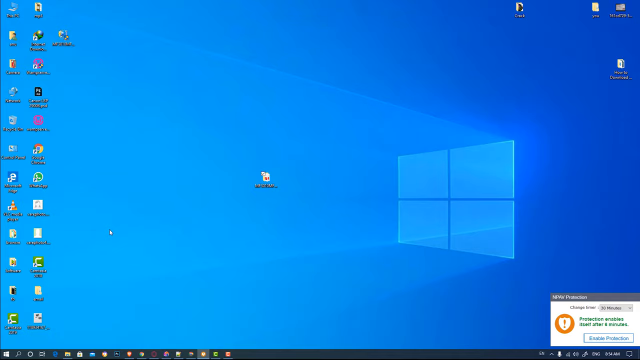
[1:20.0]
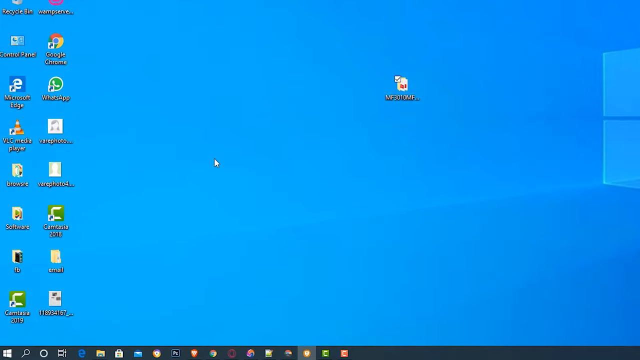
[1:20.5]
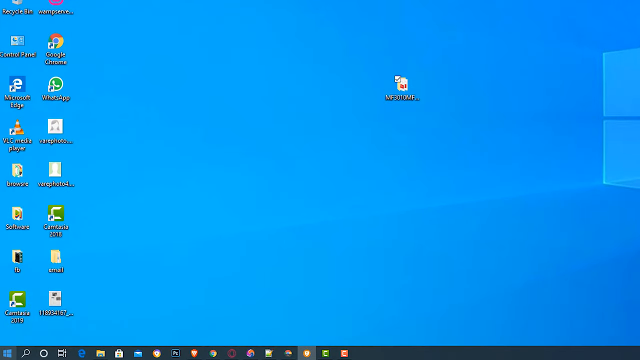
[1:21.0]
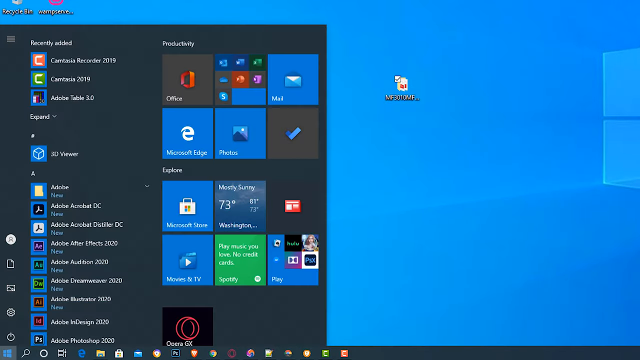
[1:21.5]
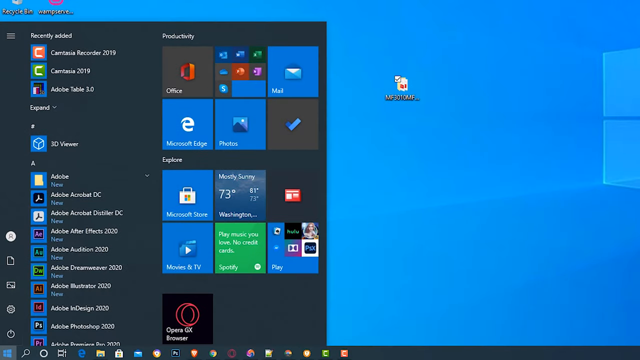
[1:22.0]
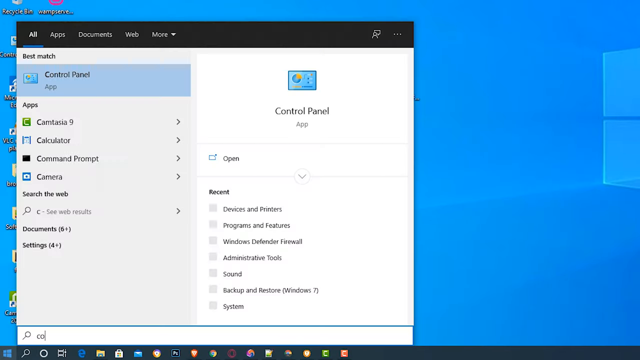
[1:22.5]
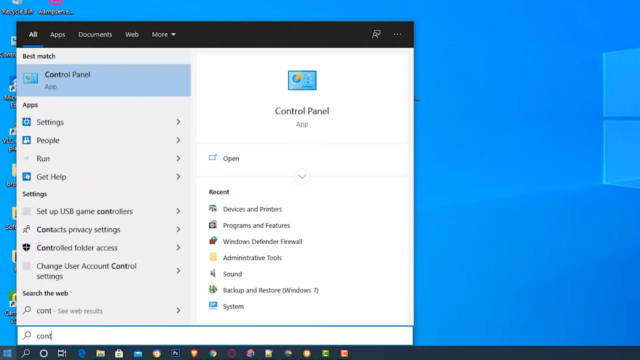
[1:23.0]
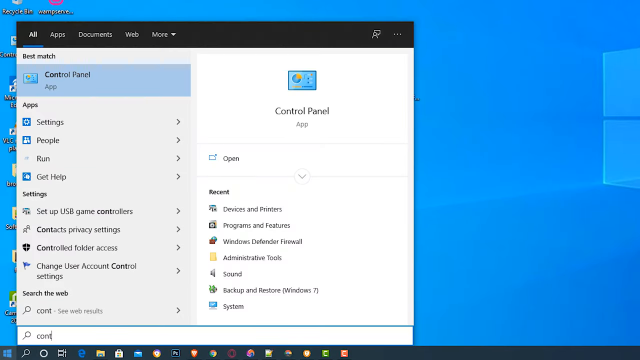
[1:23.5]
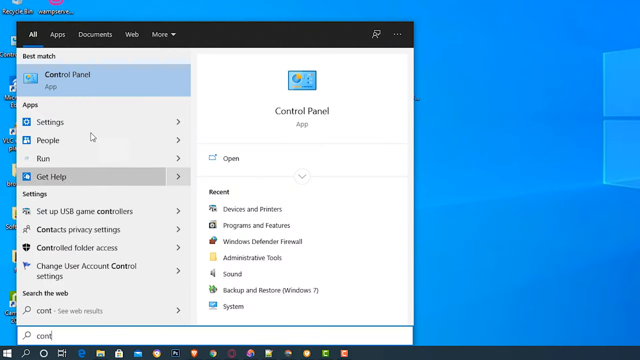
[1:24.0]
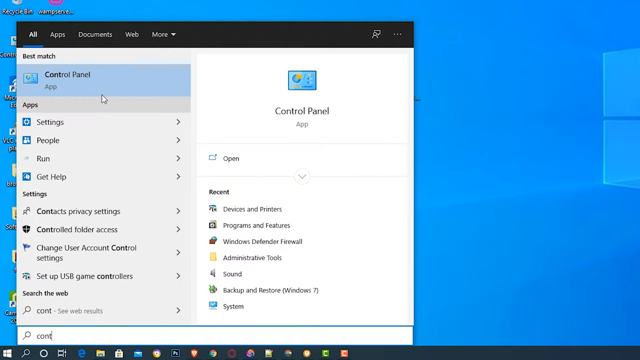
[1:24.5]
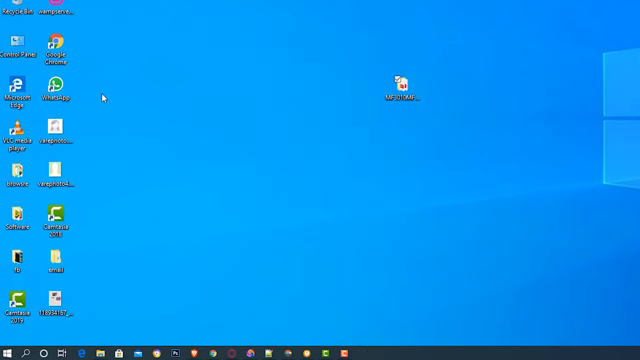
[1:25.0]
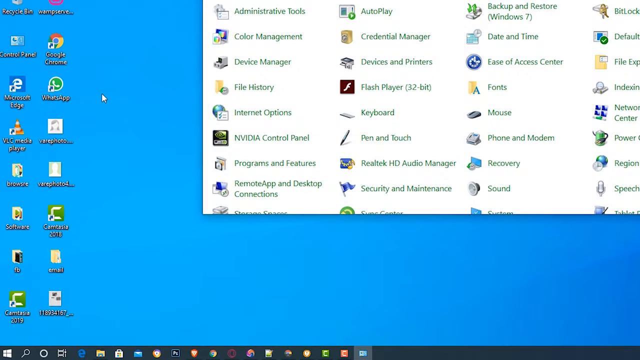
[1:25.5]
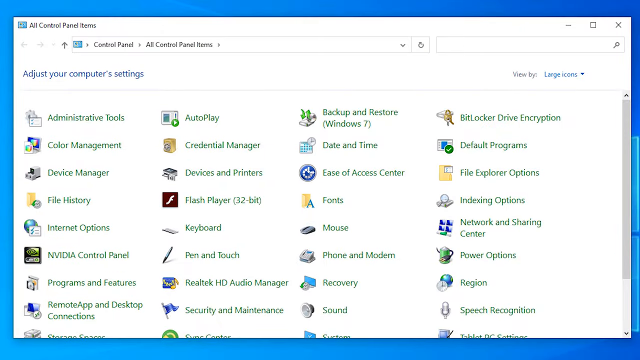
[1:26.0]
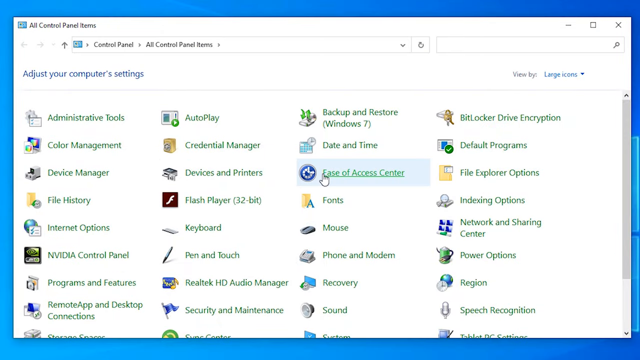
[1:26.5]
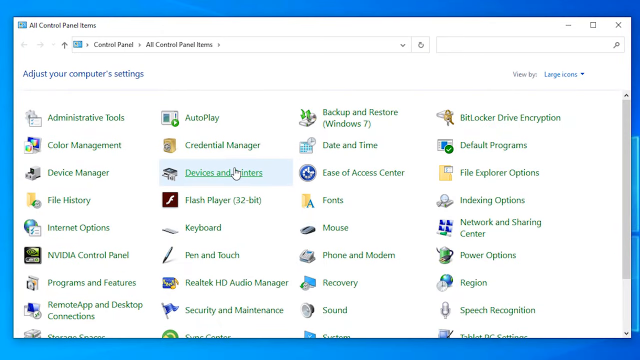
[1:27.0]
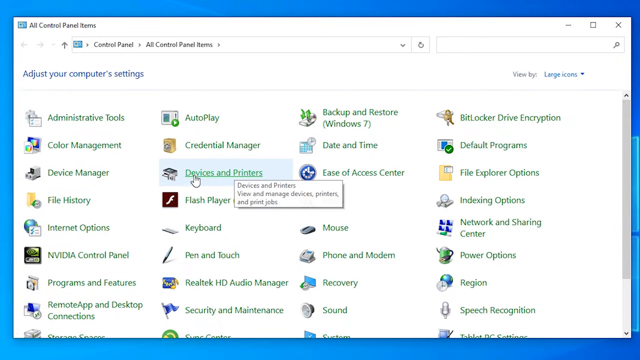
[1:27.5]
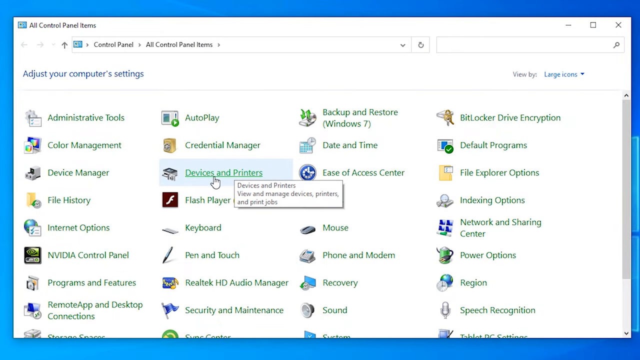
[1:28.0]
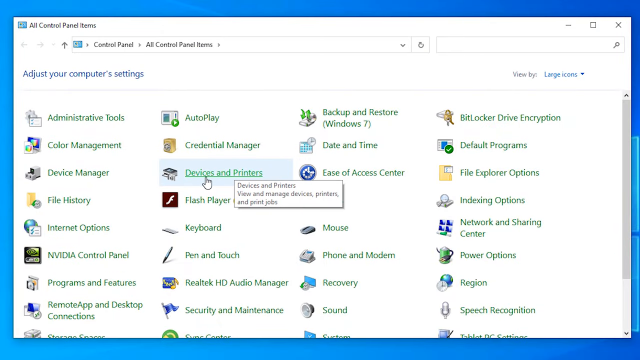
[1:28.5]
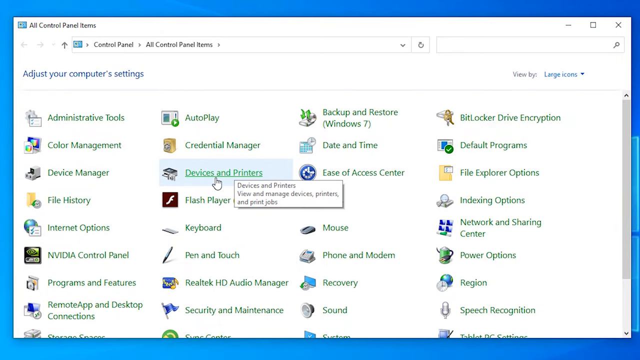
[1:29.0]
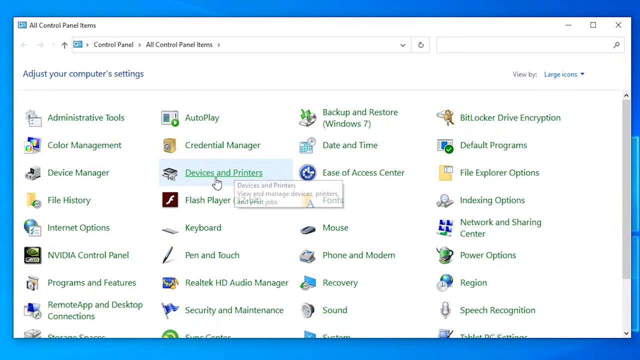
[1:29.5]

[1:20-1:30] A home screen with a blue background and a Windows logo has a whole bunch of icons on the left side and one isolated icon on the right side, towards the middle of the screen. The user seems to click on the start menu, and a menu pops up showing a whole bunch of options with icons next to them. They click on one, and it changes to another menu with a lot of options. They click an option, and it goes into a window with more options; as they hover over some of them, the options are highlighted in something like a light blue color. They click on one of the options.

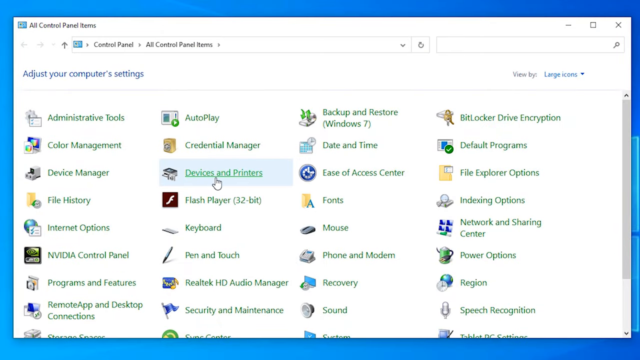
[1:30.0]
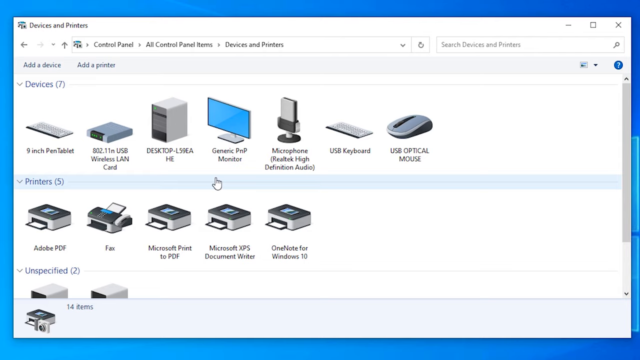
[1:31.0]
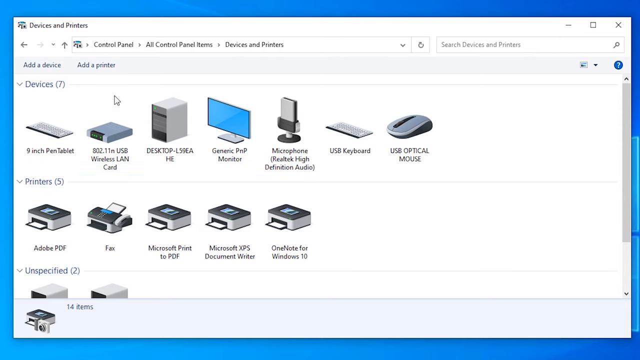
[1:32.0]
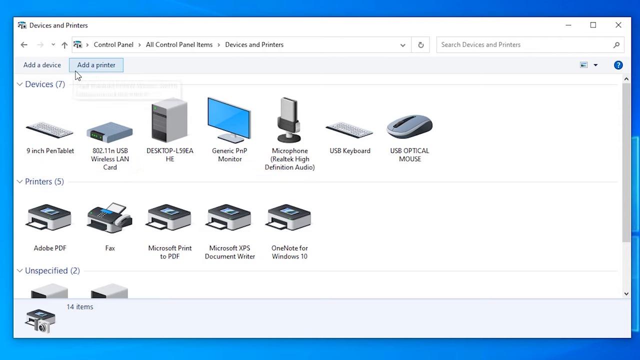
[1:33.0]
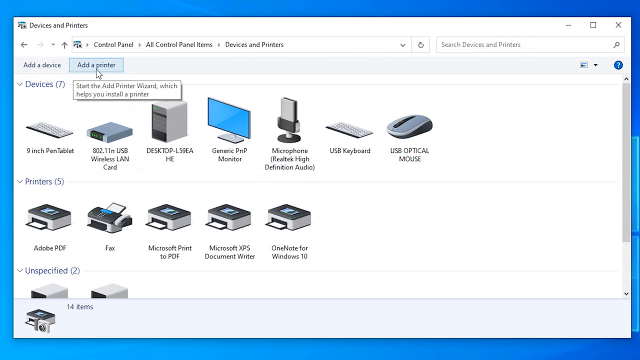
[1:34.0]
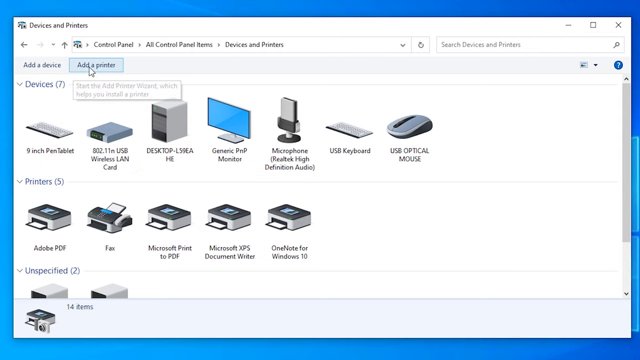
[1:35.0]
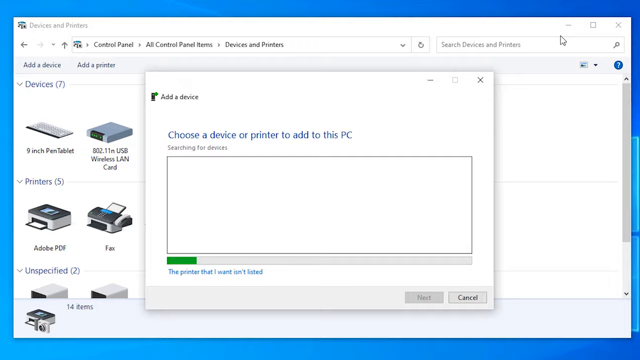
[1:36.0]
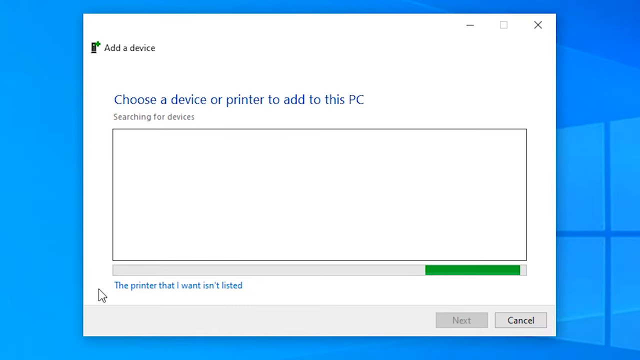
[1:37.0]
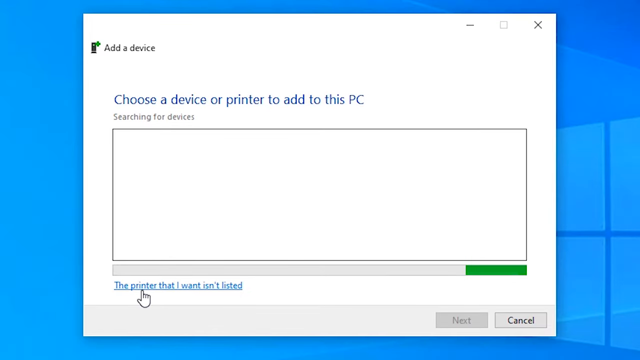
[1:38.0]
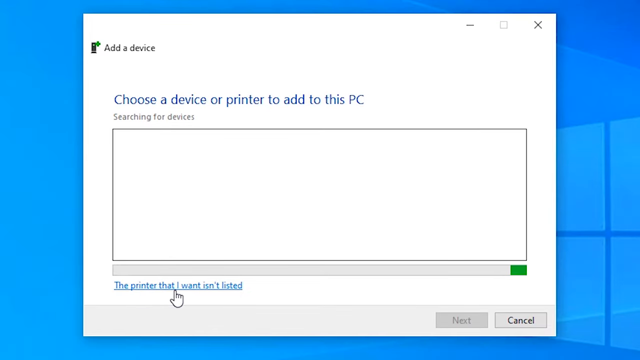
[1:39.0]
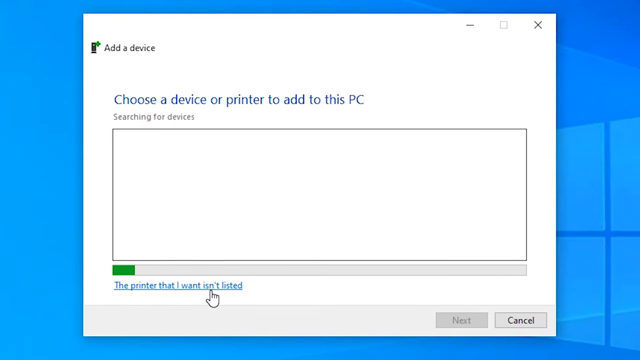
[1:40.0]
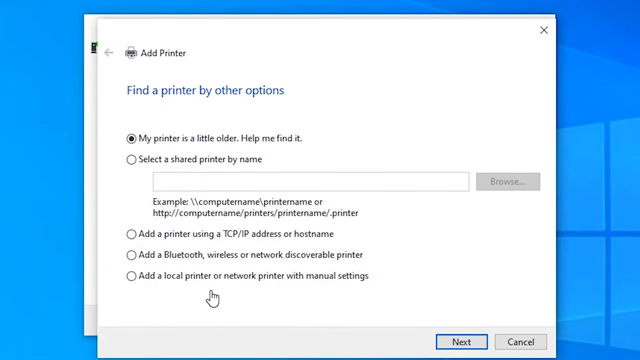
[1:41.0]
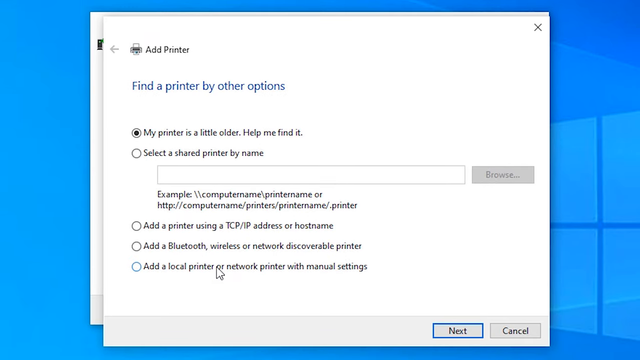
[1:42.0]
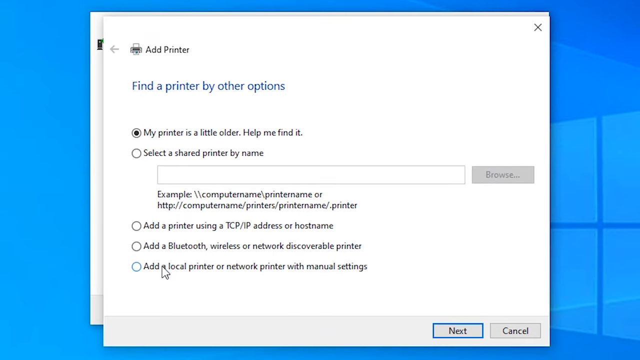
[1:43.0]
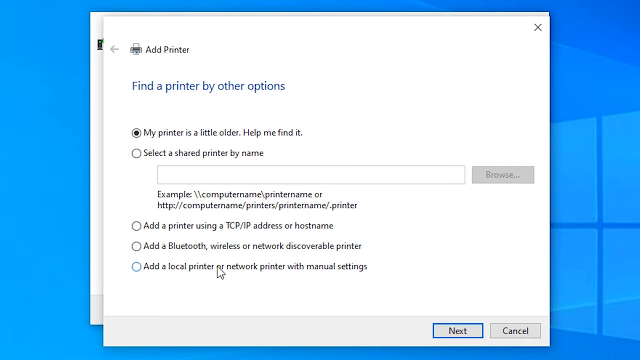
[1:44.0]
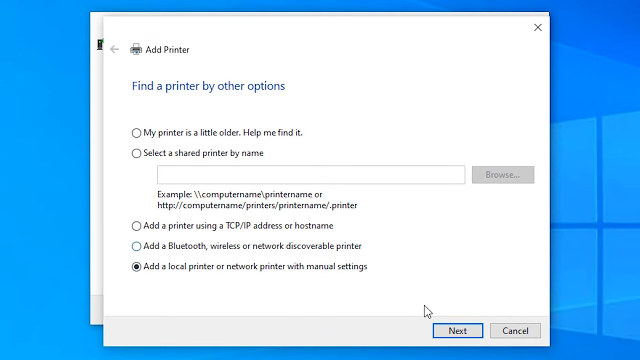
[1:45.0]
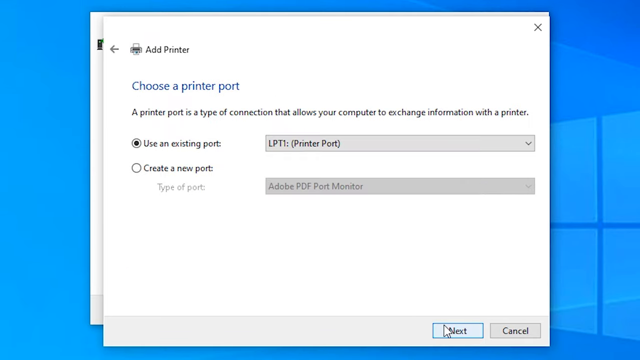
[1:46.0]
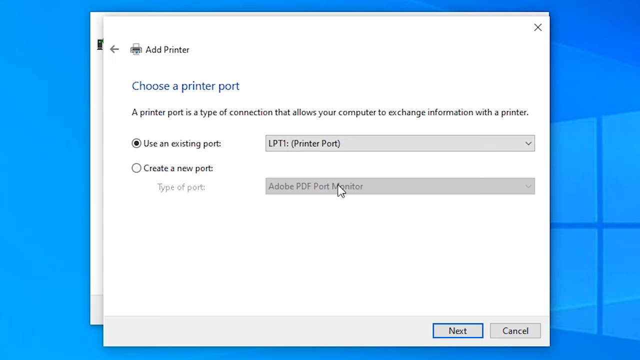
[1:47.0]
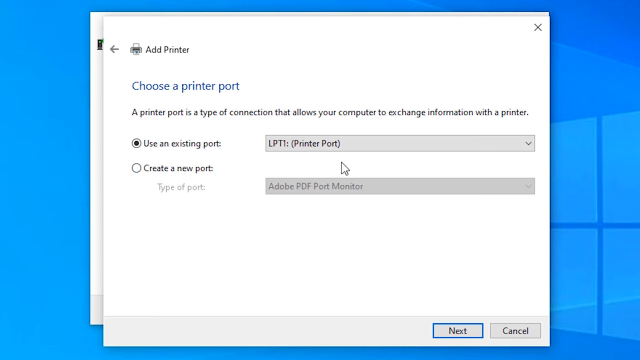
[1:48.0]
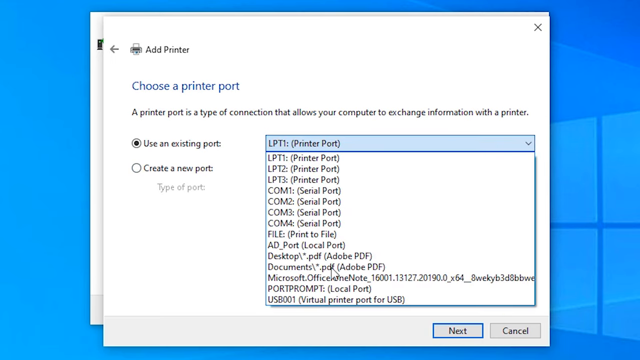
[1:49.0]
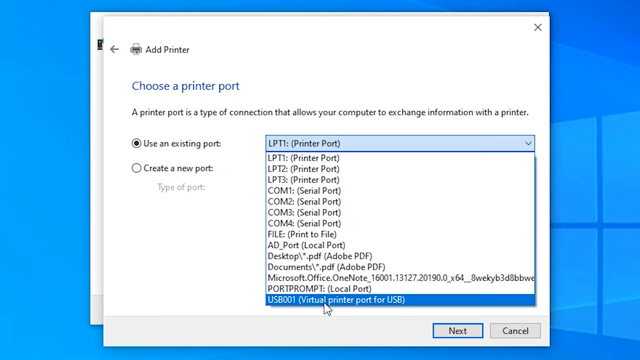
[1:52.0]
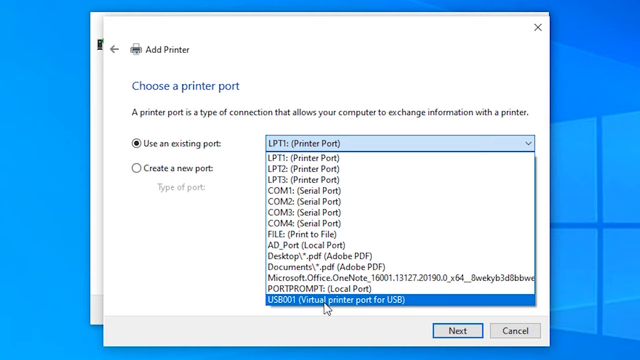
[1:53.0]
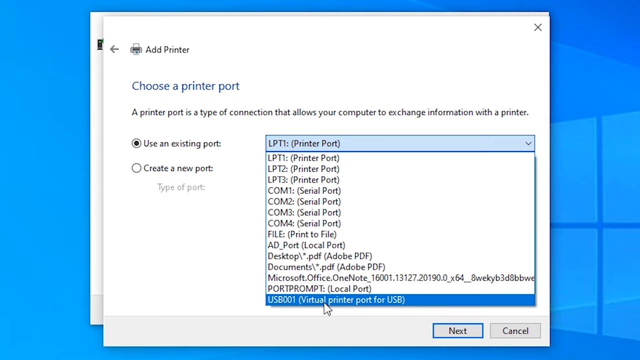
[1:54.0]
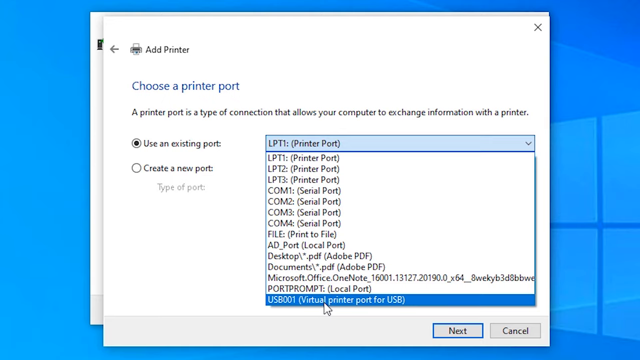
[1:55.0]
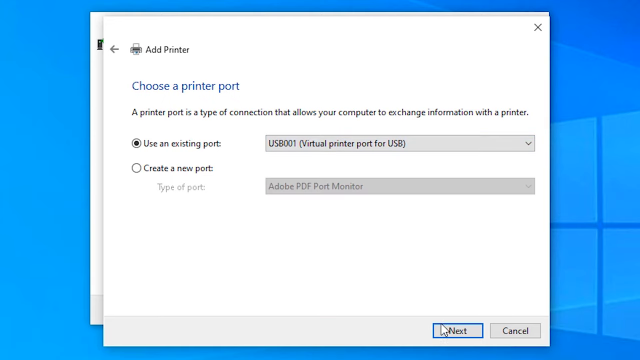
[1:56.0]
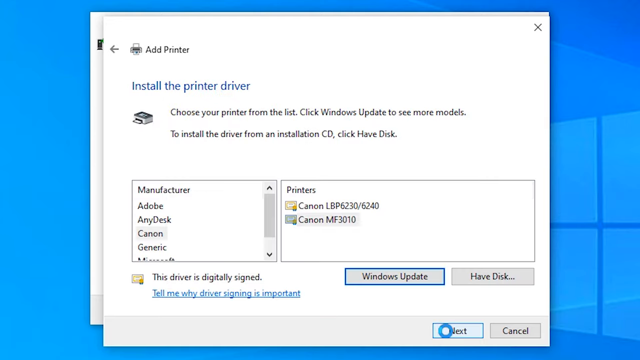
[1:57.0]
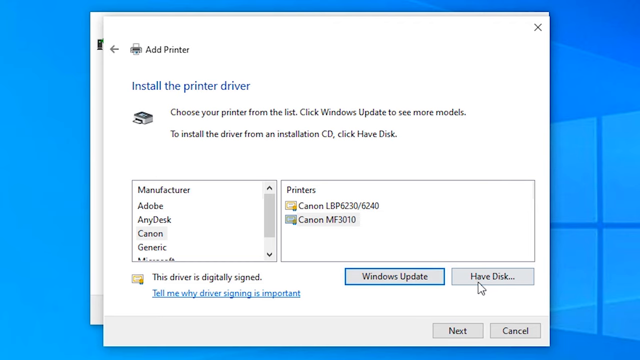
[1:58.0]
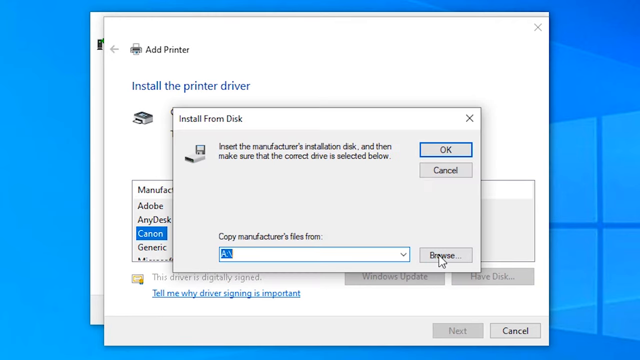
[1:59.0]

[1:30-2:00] In a window on the computer screen, the cursor hovers over an option and clicks it, navigating to another menu with a whole bunch of icons that look like computer cards. The user seems to hover over a tab at the top of the screen and clicks it; a menu pops up, and a green bar shows that something is kind of downloaded. Another window pops up that says "add printer", with options underneath that have radio buttons; clicking one fills its radio button. They click the button at the bottom of the window, and it navigates to another menu with a drop-down menu. They click on it, a whole bunch of options appear, and they click one highlighted in blue. They then click the next button, click another button, and hit okay.